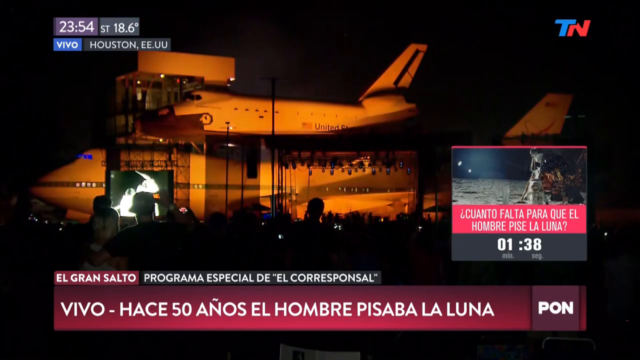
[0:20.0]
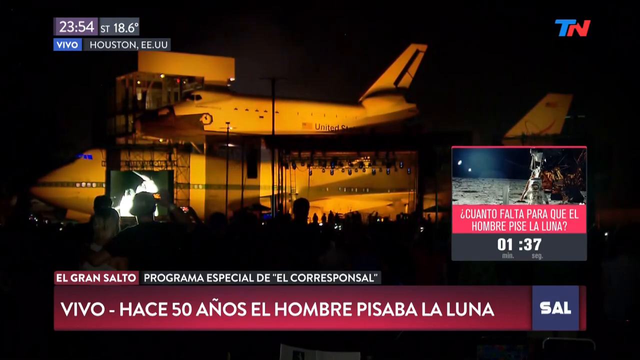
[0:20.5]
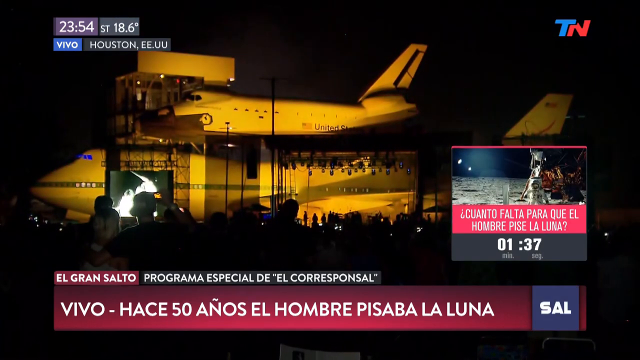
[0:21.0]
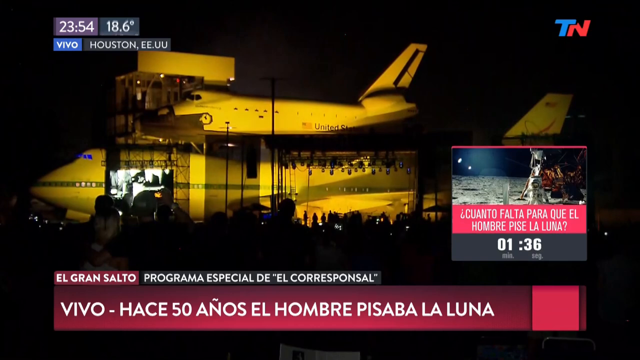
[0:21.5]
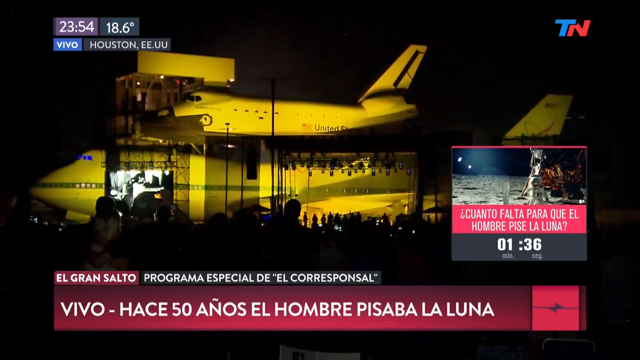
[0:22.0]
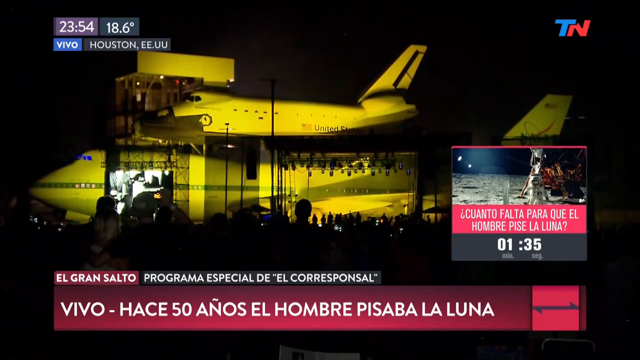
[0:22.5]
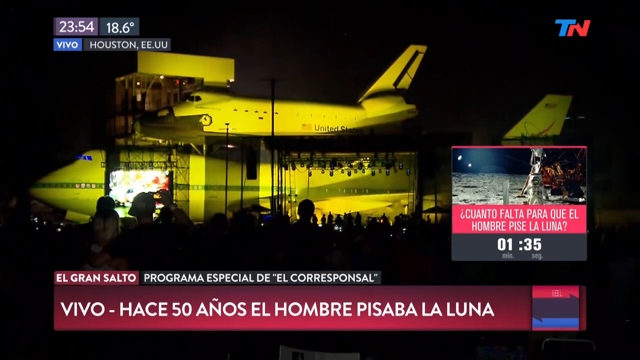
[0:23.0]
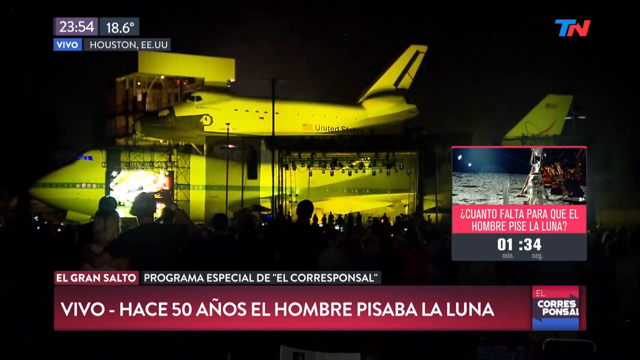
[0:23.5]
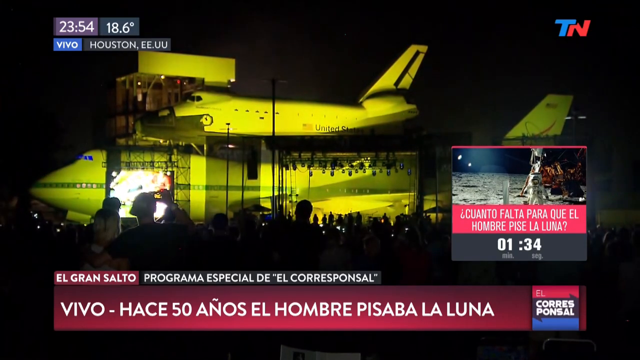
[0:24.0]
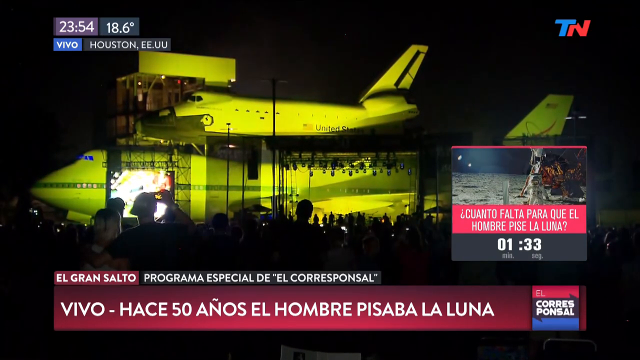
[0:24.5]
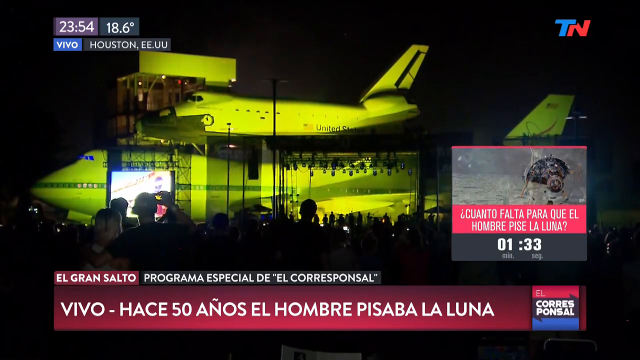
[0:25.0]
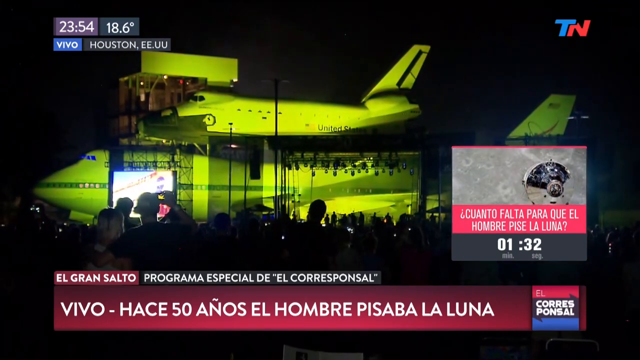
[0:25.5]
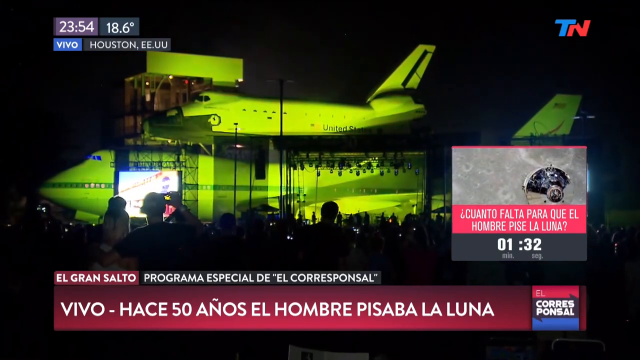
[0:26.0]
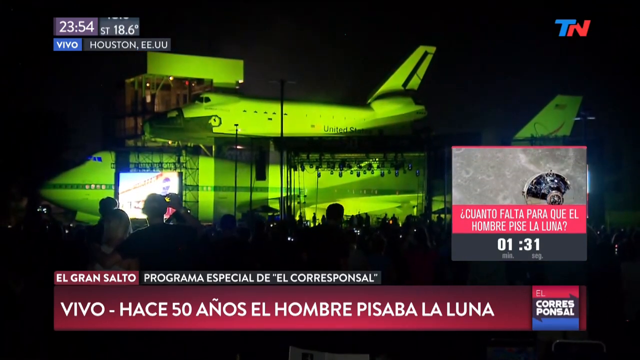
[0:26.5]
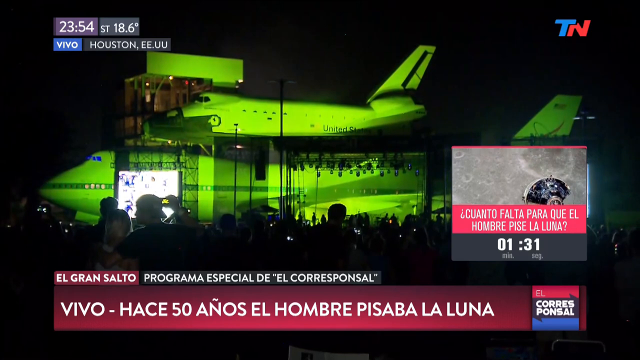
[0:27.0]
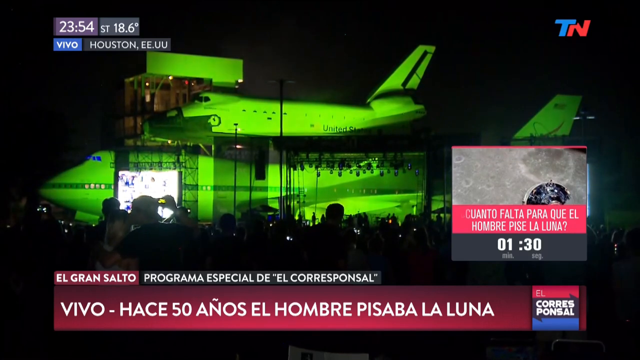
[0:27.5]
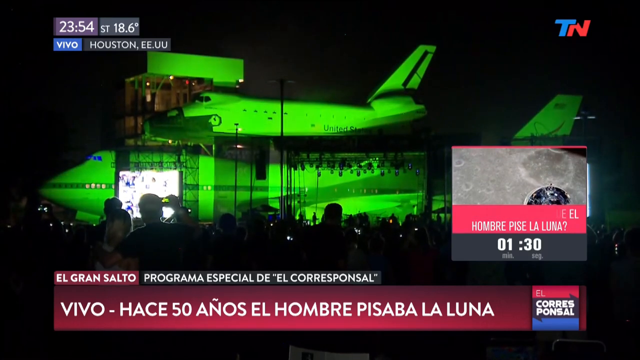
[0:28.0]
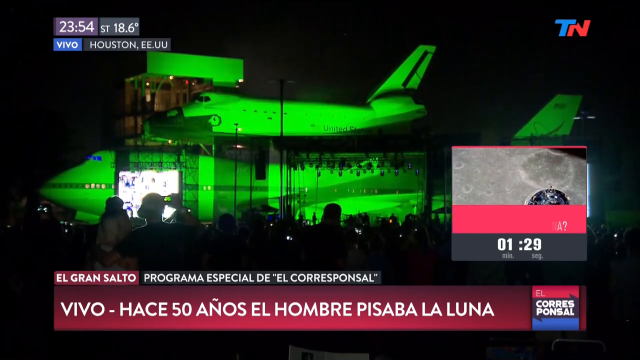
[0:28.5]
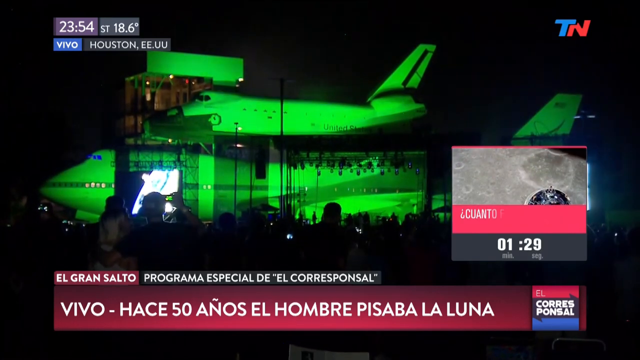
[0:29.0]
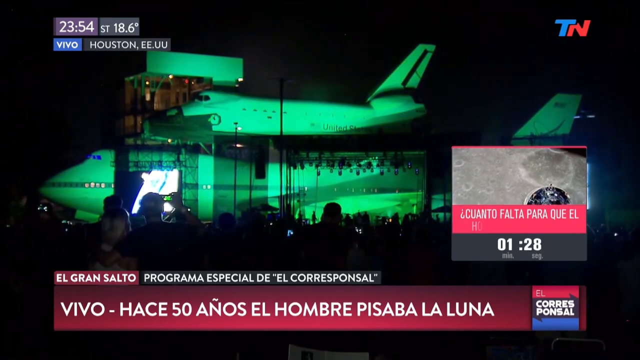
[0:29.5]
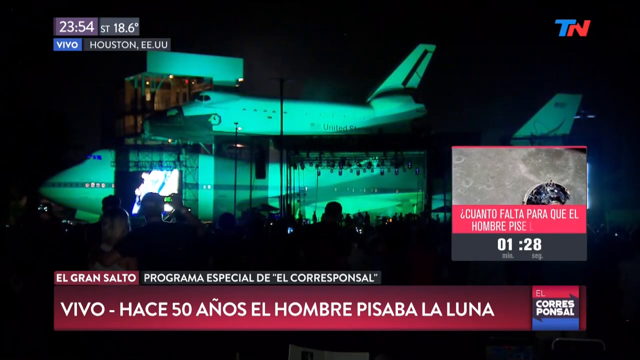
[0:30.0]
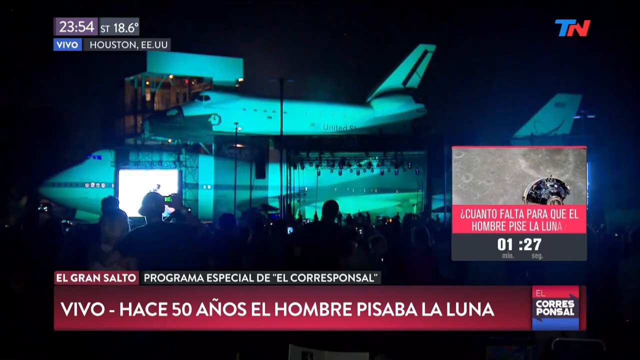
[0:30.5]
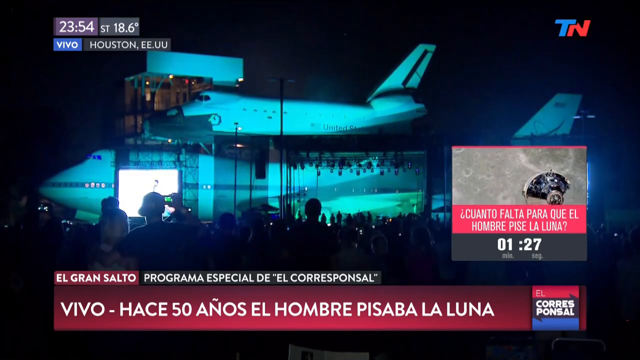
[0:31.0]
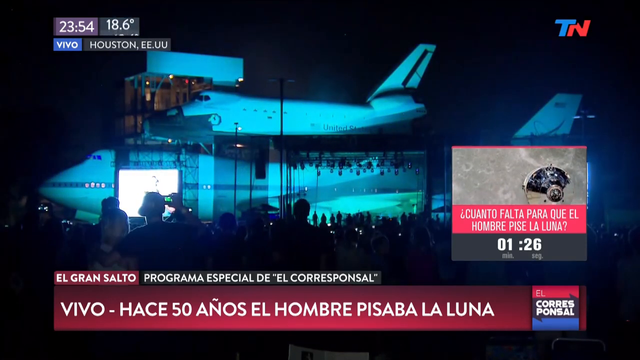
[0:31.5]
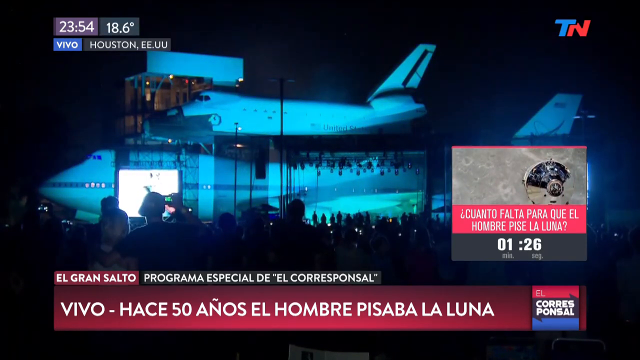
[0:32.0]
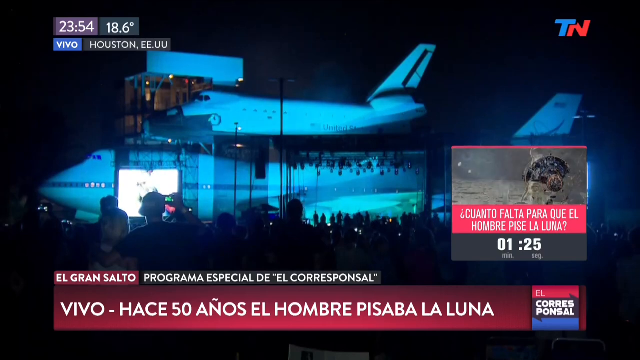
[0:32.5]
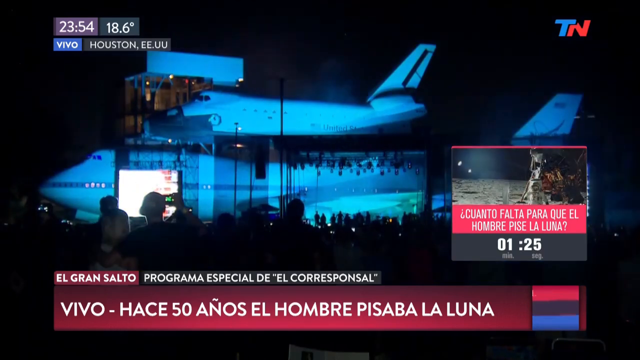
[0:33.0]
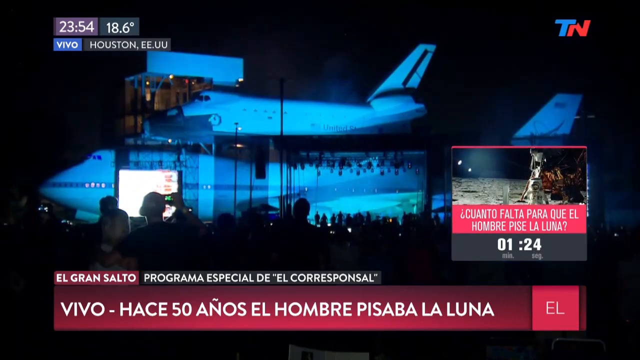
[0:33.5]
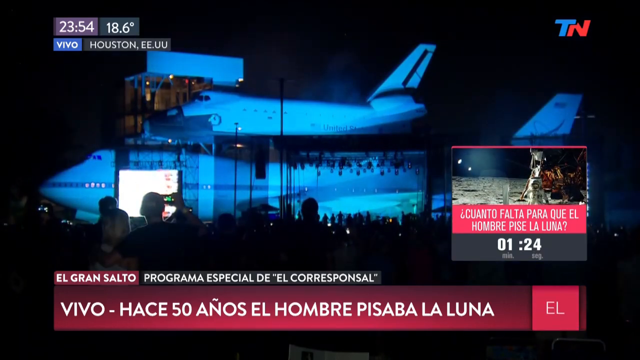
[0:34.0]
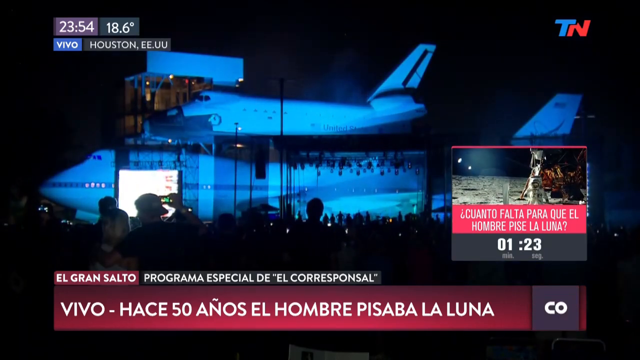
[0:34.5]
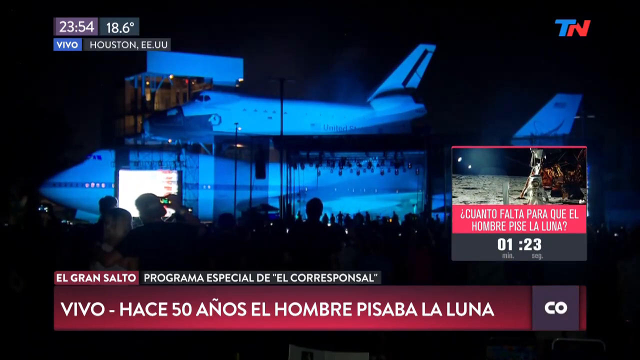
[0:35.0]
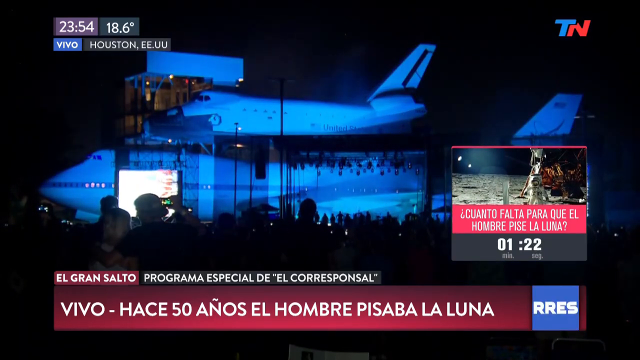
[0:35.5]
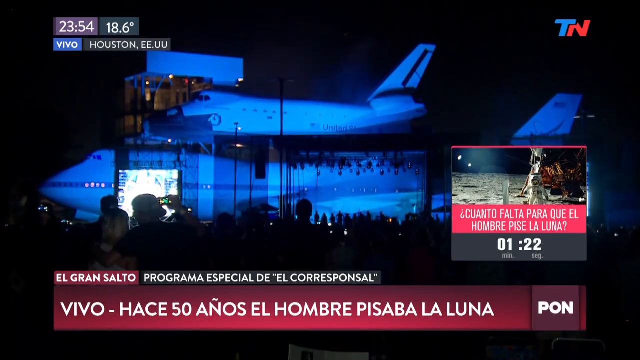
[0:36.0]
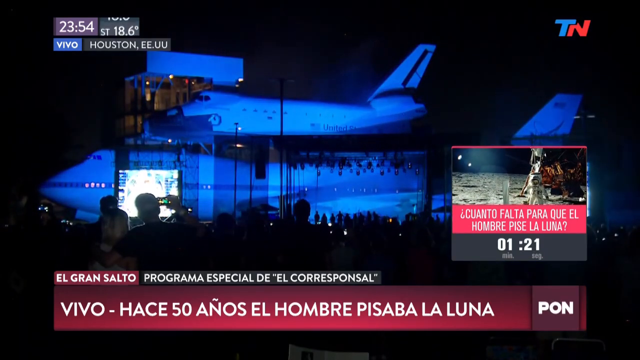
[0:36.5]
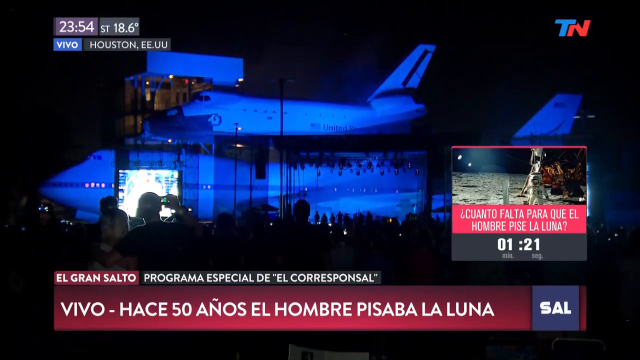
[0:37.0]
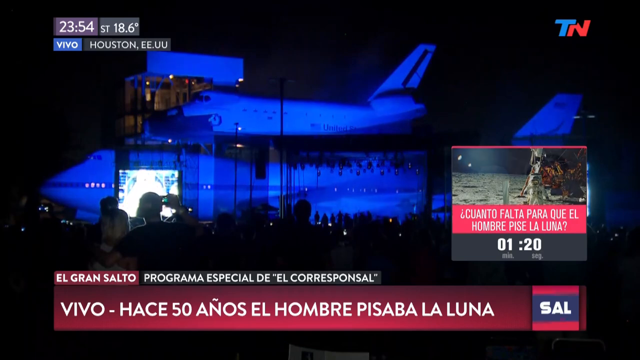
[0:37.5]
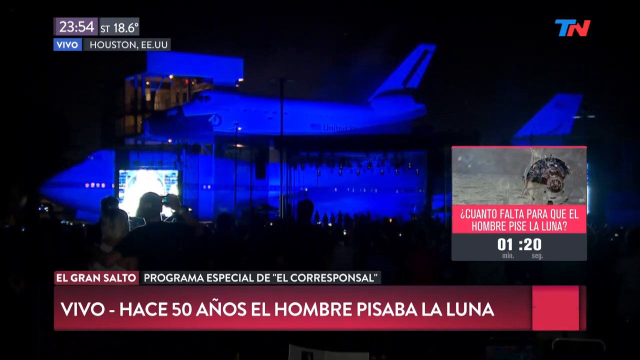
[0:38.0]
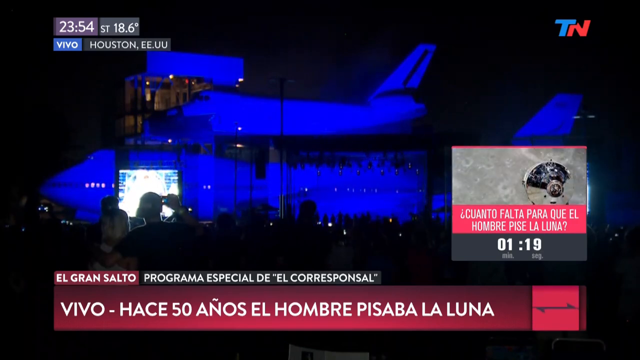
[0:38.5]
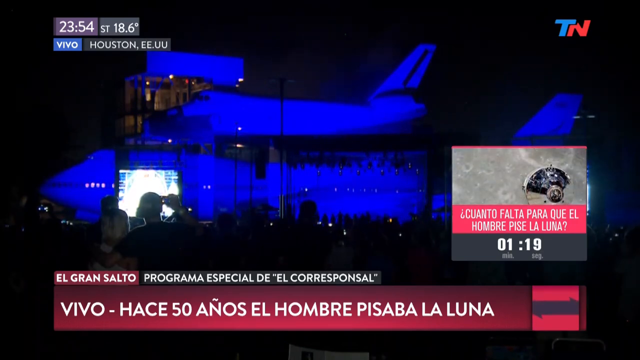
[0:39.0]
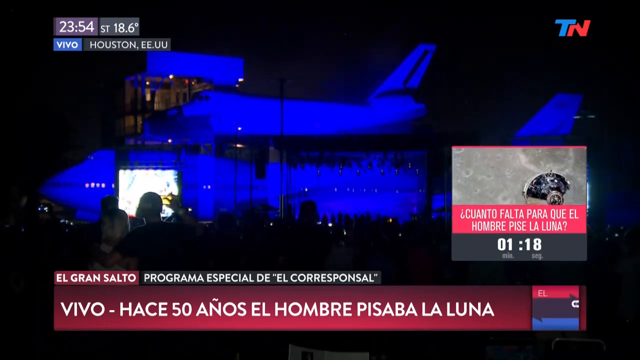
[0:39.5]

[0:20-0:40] The plane is still shown, now with a yellow light on it. A crowd of spectators waits for the countdown, which has a minute and 20-some seconds left. The time appears to be about 11:54 at night. "United States" is written on the plane, which looks somewhat like Air Force One. It is dark outside, so little is visible, but many people have their phones out. The words on the screen are in Spanish.